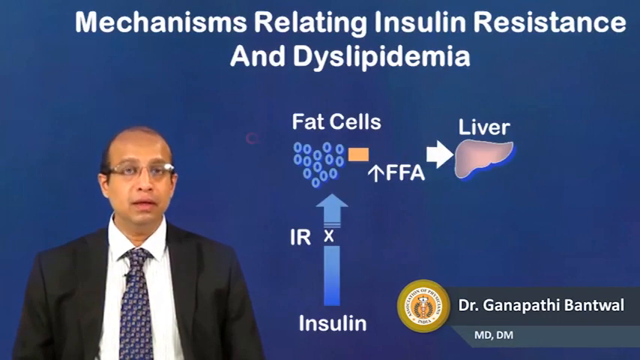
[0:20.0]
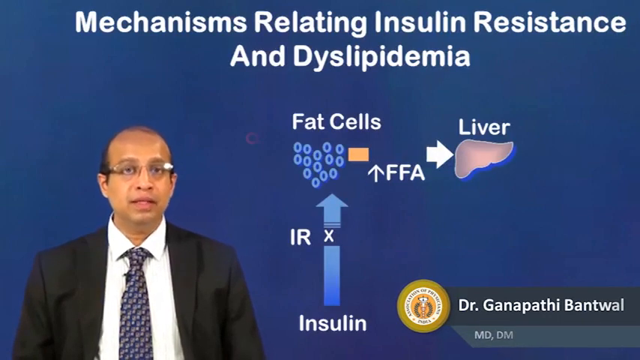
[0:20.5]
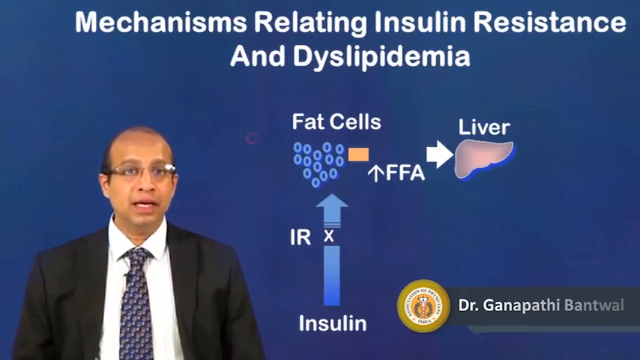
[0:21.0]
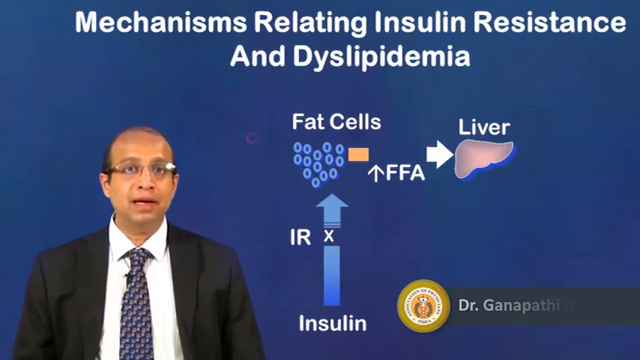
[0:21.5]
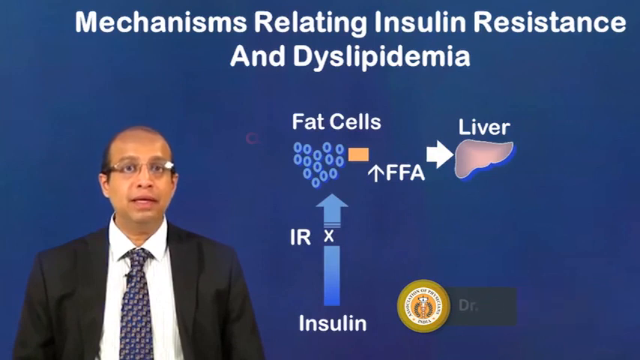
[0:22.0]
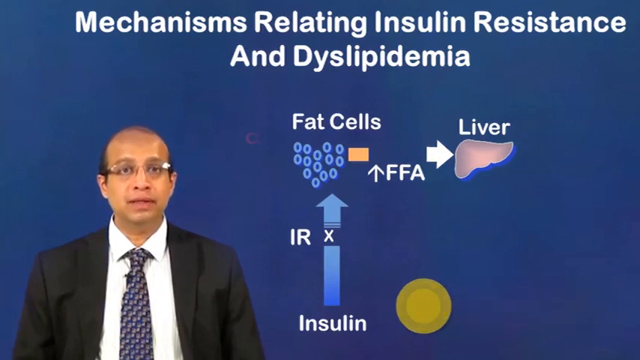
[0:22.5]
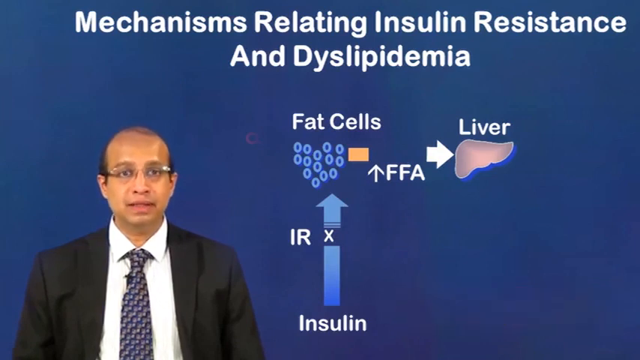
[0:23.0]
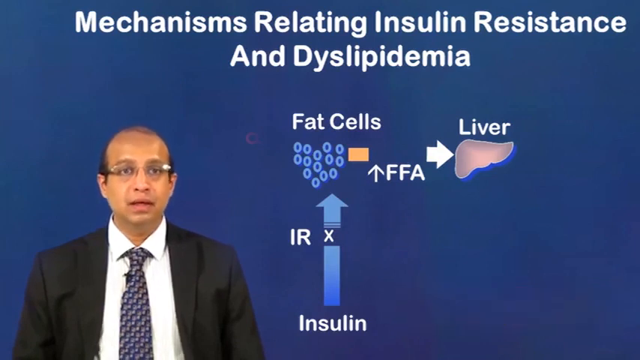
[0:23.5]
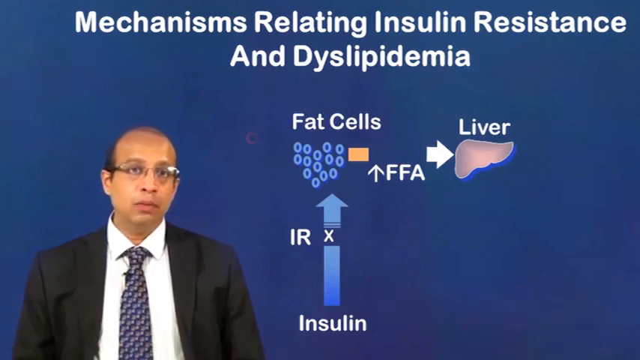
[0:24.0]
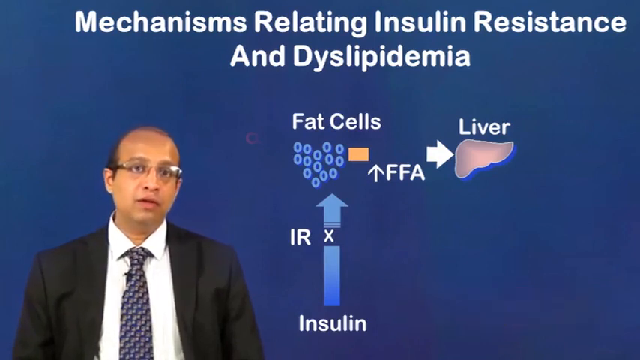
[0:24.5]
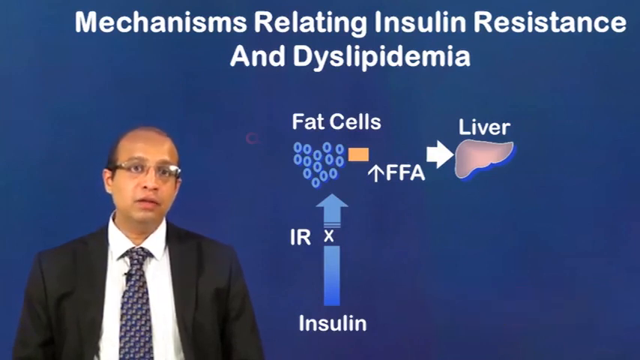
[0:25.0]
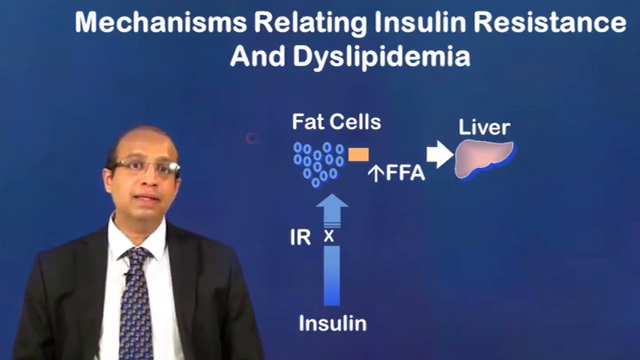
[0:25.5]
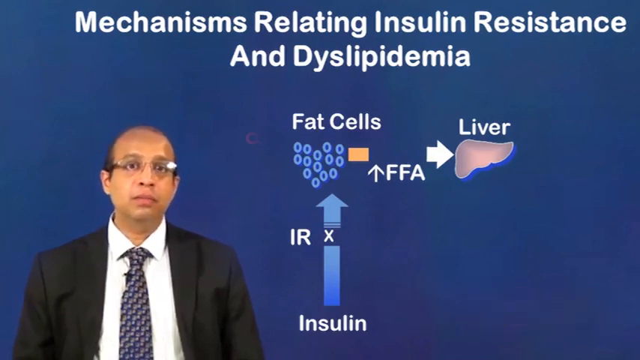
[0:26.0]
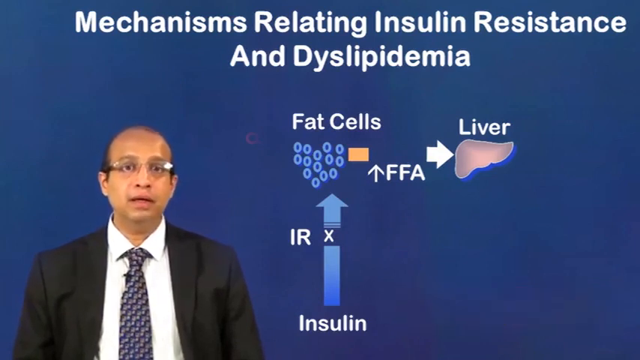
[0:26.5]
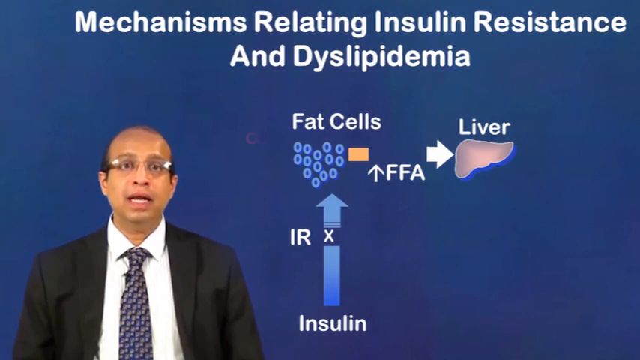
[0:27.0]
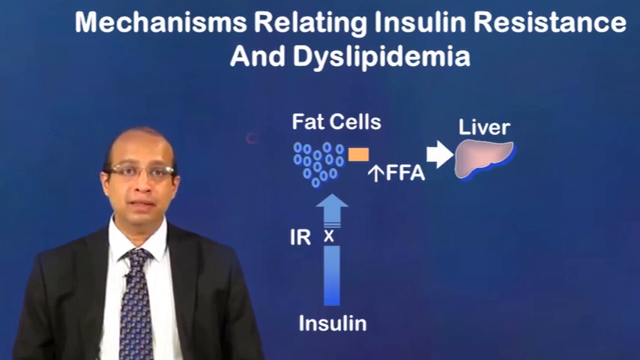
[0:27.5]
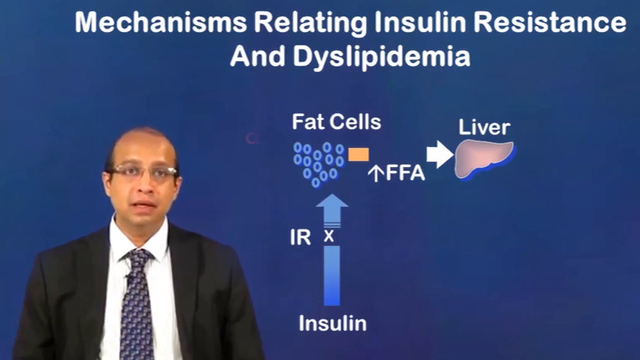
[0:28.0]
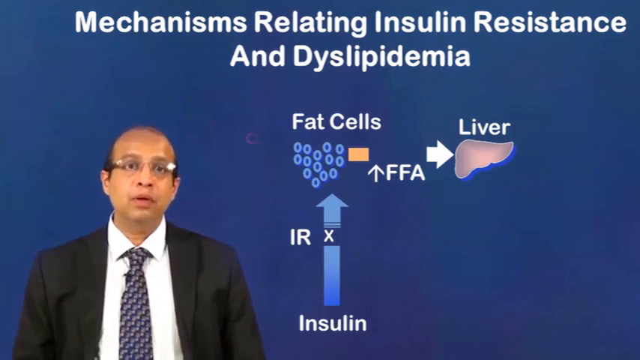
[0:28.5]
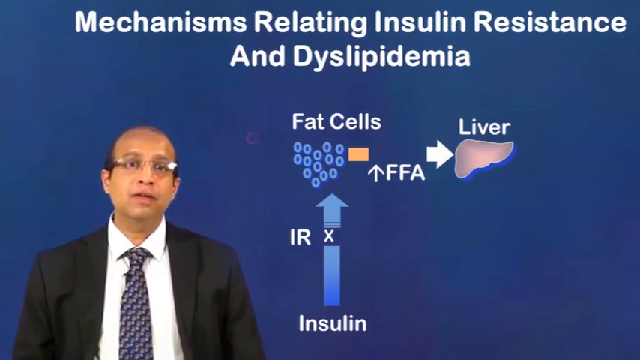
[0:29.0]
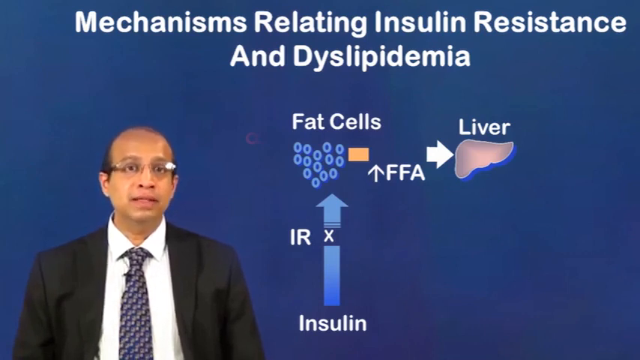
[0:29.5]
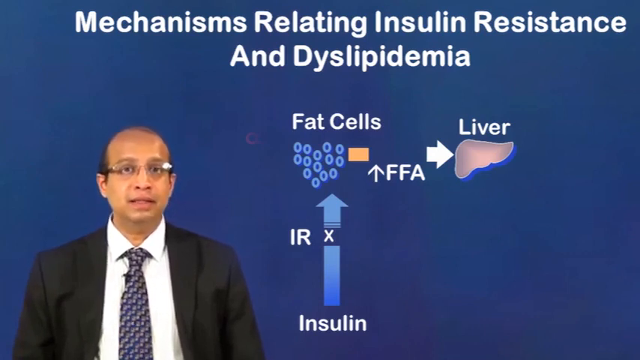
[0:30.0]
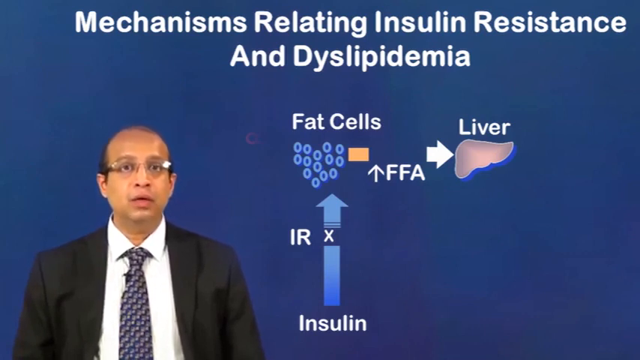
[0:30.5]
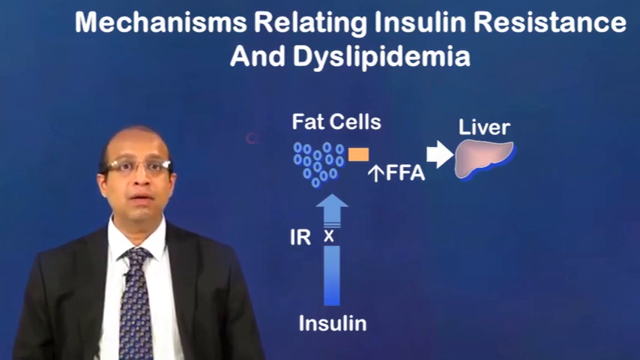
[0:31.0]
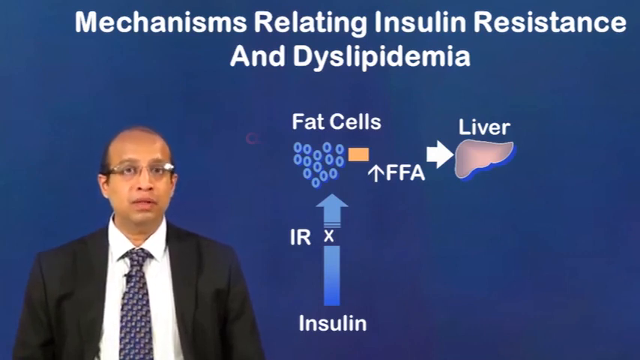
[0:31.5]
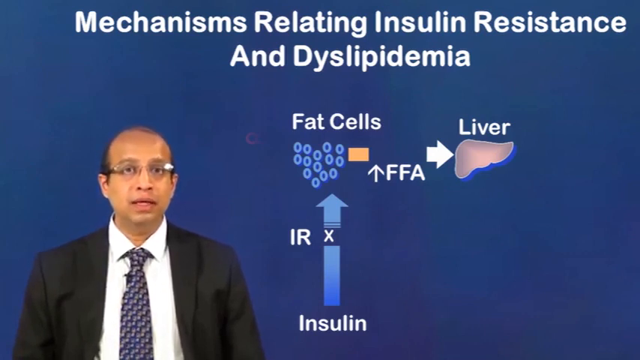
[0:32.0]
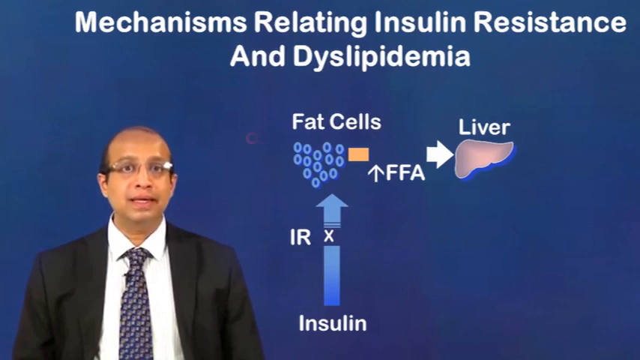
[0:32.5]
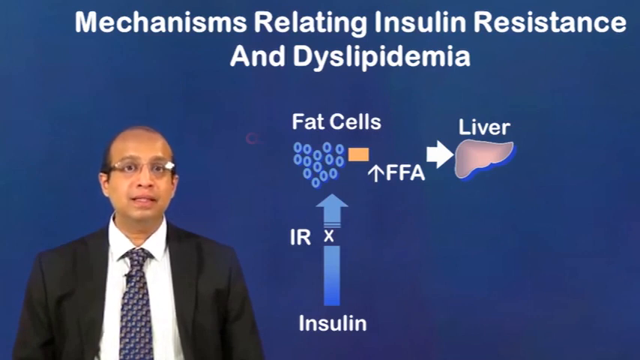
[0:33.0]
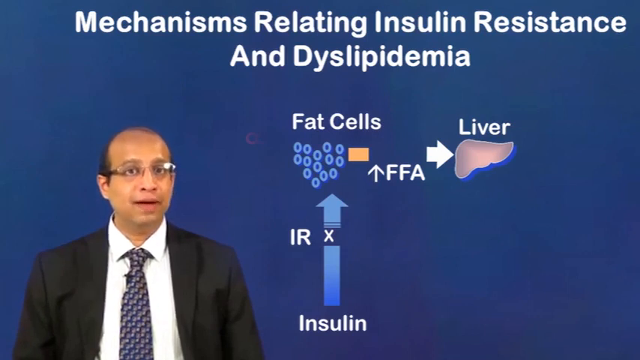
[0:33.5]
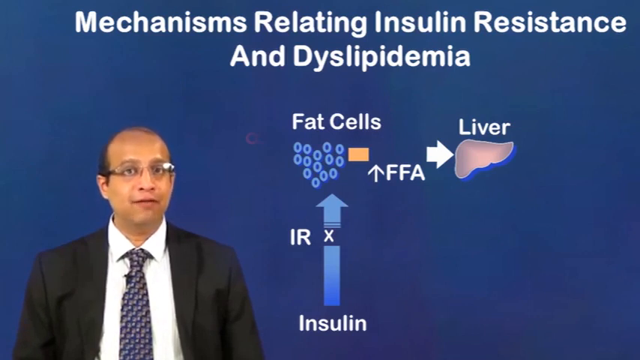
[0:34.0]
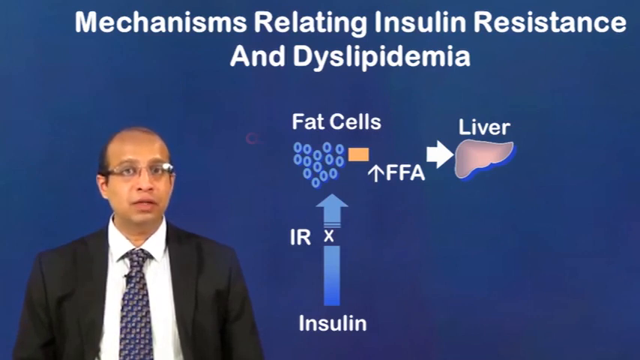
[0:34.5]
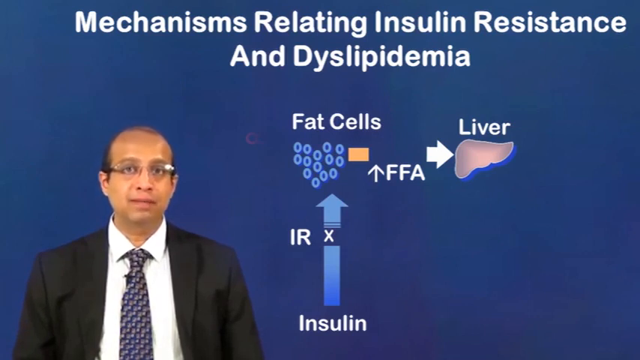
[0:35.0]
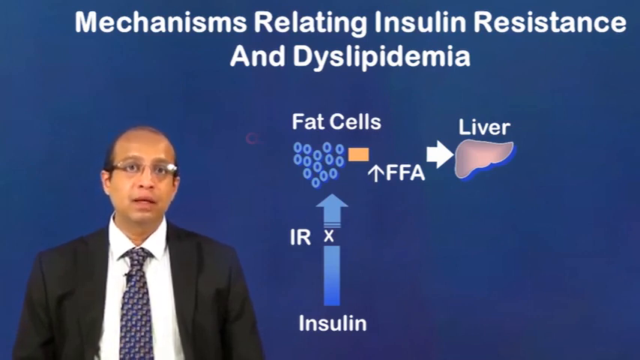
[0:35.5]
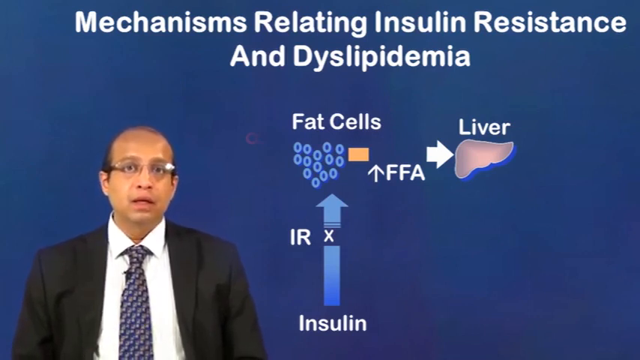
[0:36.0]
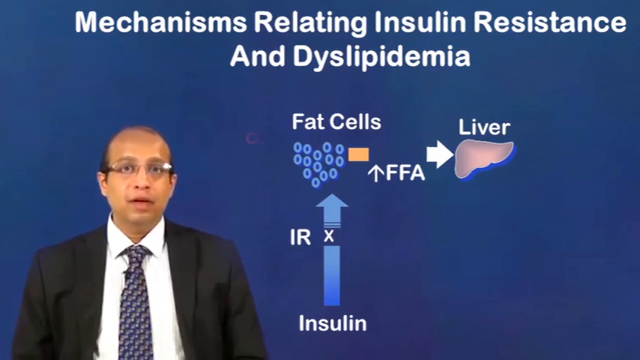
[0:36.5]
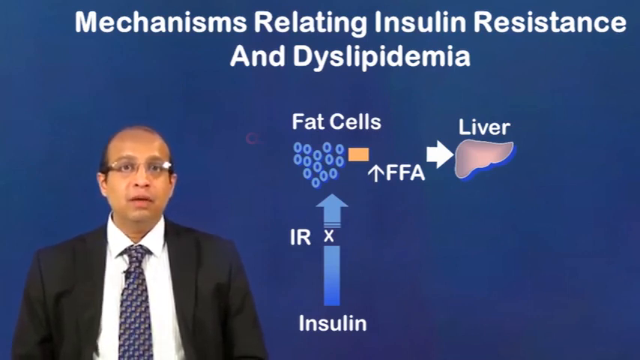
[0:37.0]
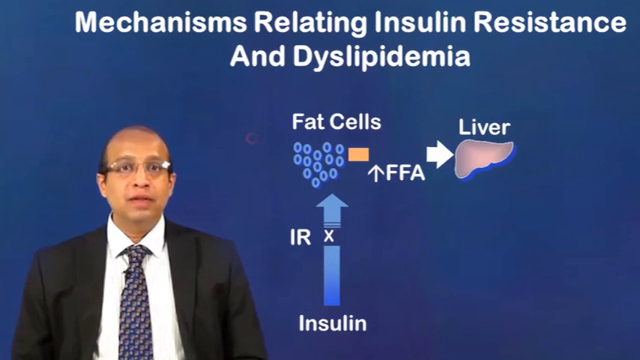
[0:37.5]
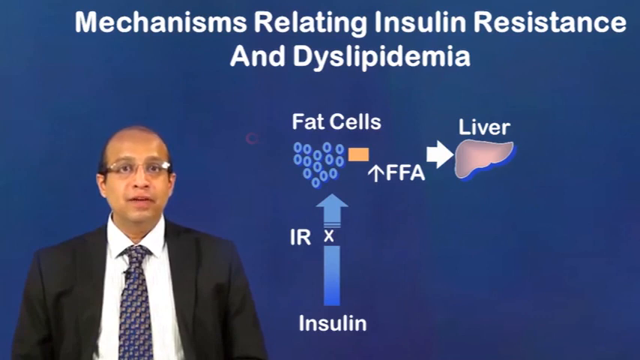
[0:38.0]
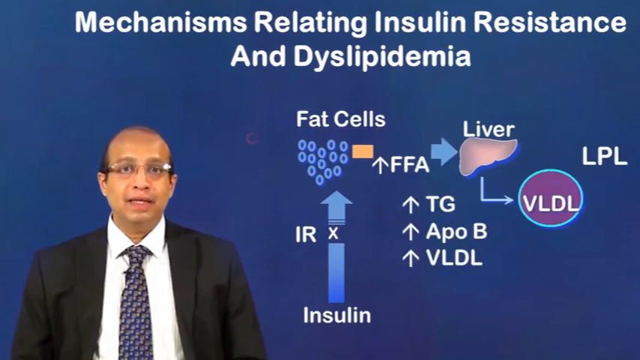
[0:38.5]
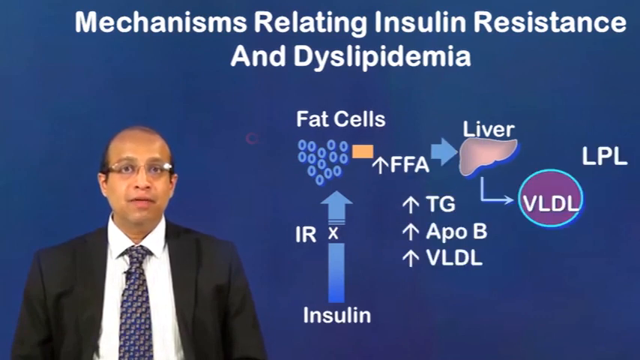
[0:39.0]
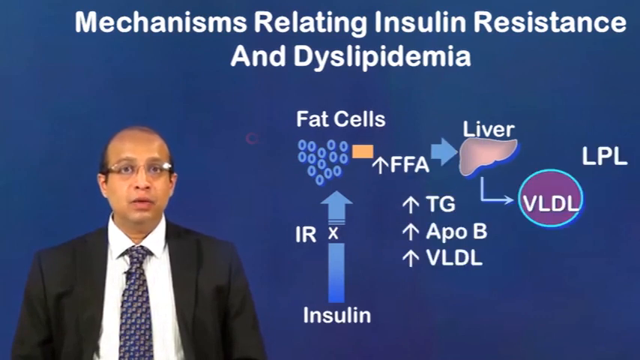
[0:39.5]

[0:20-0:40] The doctor talks while illustrations appear in the center of the screen. The title reads "mechanisms relating to insulin resistance." Across the top, the illustrations represent fat cells, the liver, insulin, IR and FFA, medical terms most likely related to diabetes. The doctor does not change position and talks directly to the viewers; he wears a black suit with a white buttoned shirt, a typical professional look. Later, more medical terms are added, and an arrow runs from the liver to another abbreviated term, so the whole representation forms a pathway related to insulin.